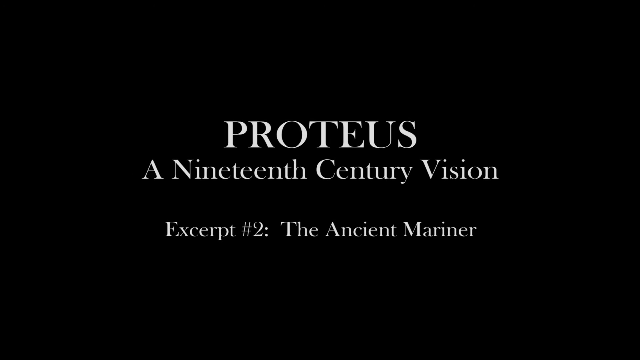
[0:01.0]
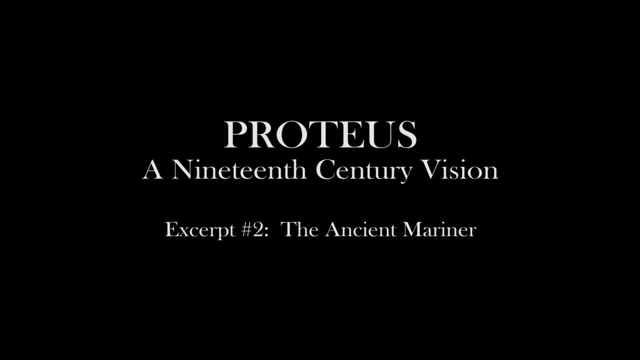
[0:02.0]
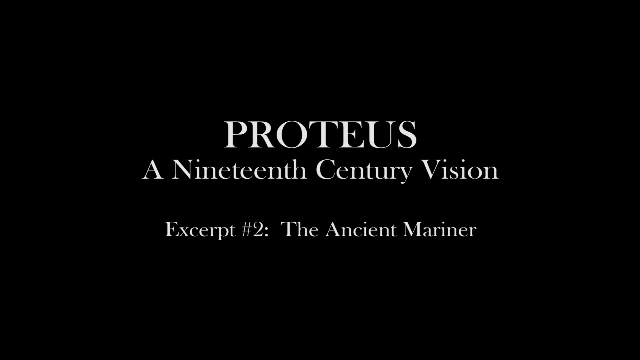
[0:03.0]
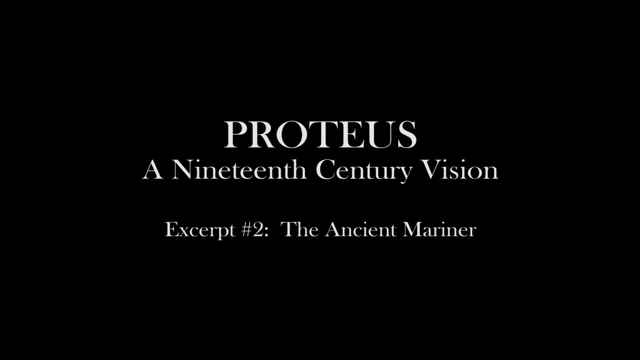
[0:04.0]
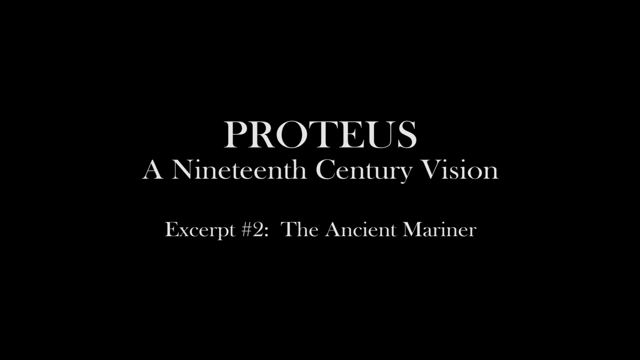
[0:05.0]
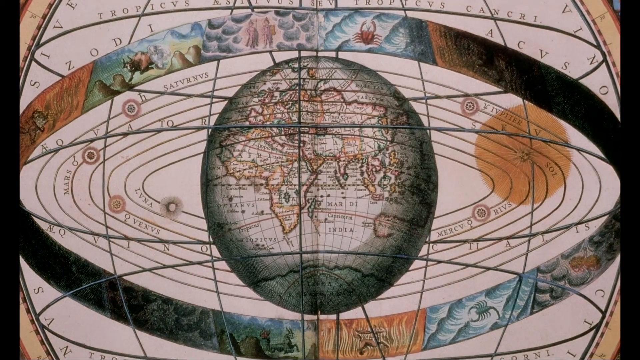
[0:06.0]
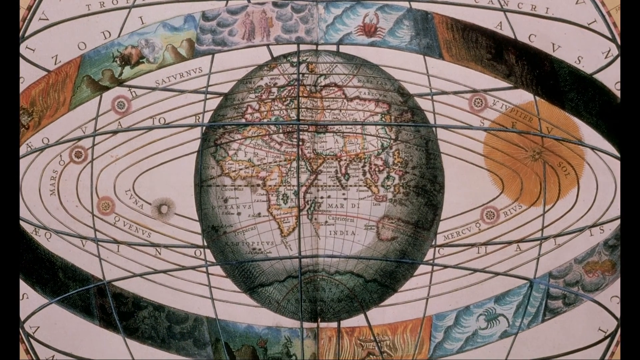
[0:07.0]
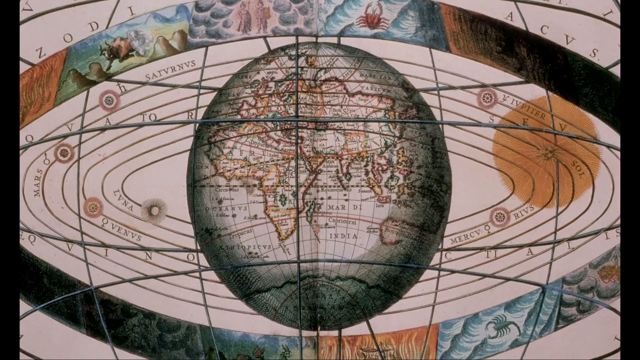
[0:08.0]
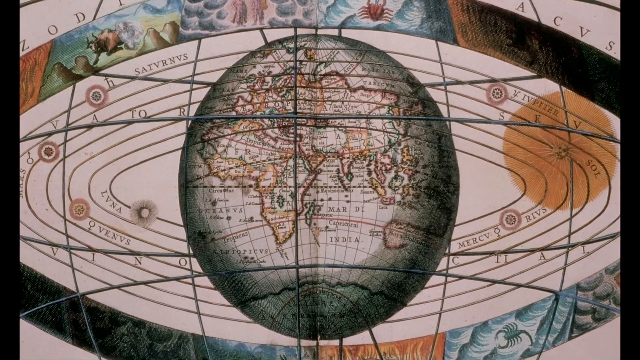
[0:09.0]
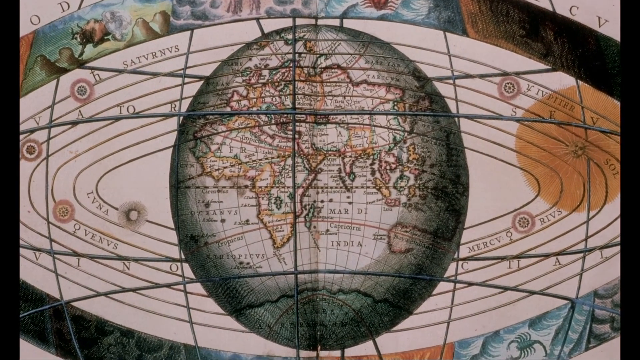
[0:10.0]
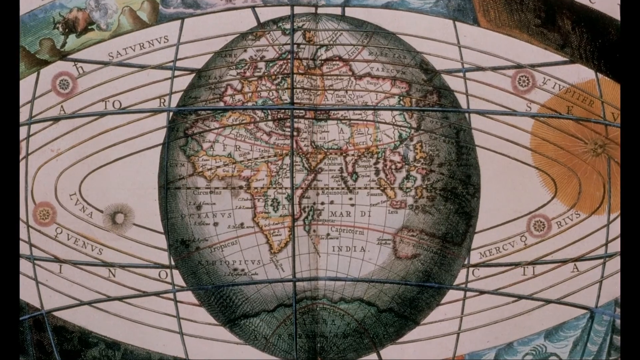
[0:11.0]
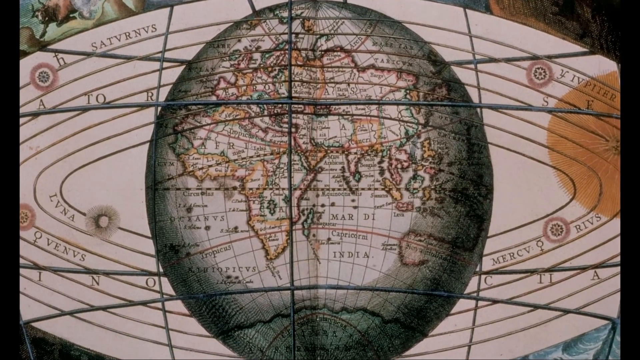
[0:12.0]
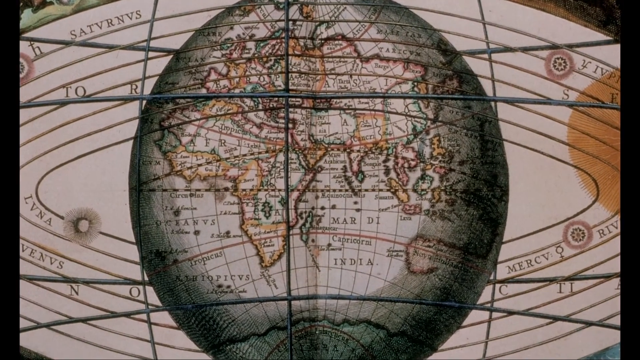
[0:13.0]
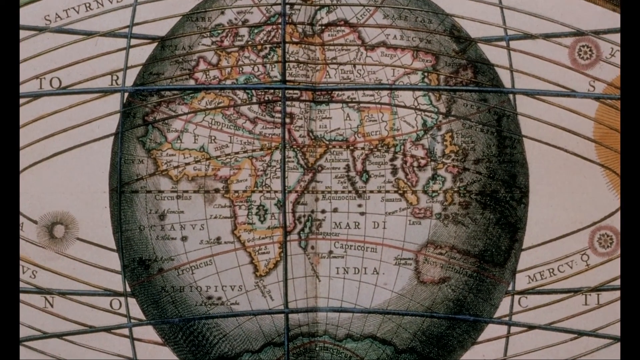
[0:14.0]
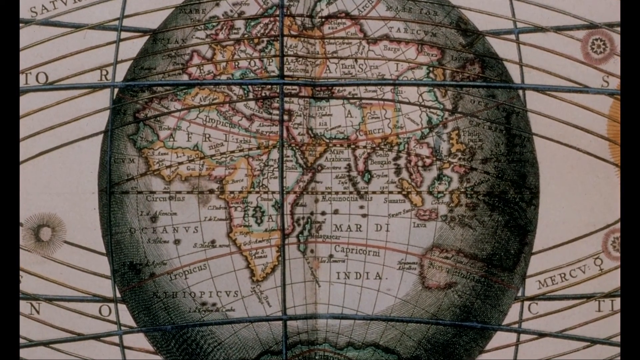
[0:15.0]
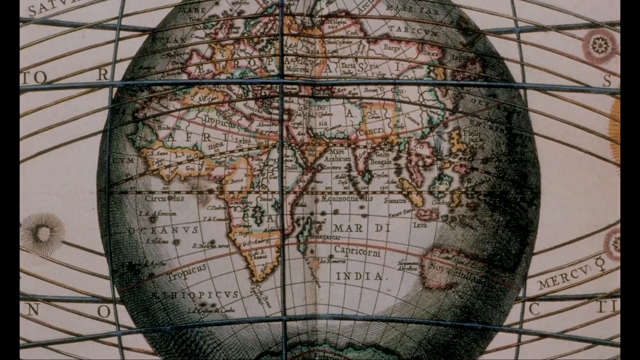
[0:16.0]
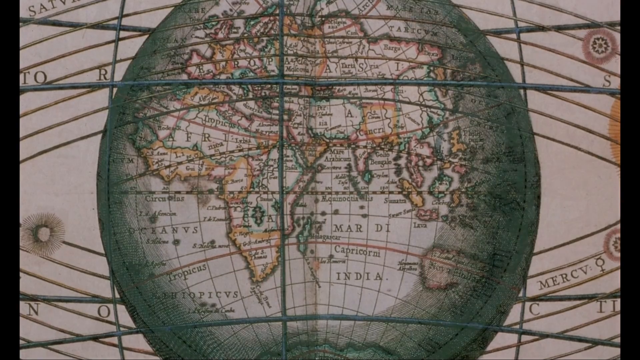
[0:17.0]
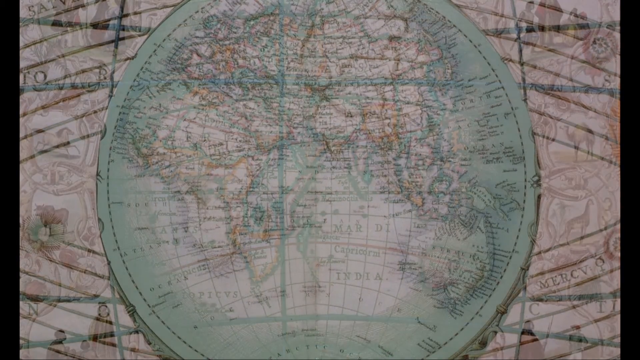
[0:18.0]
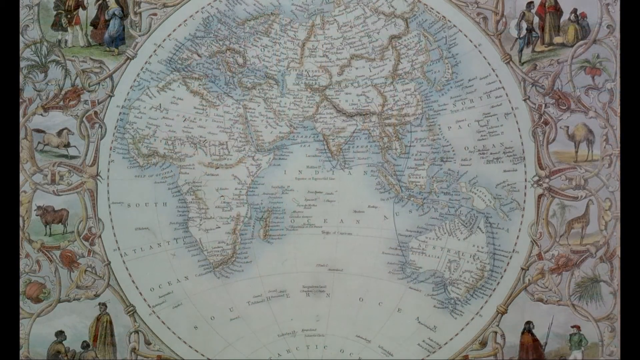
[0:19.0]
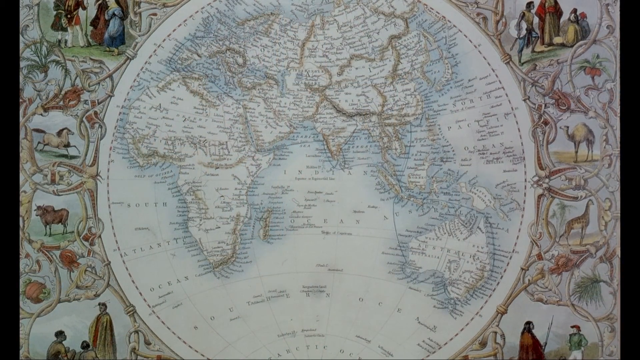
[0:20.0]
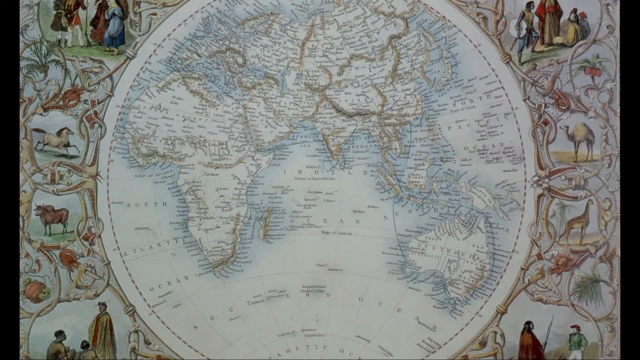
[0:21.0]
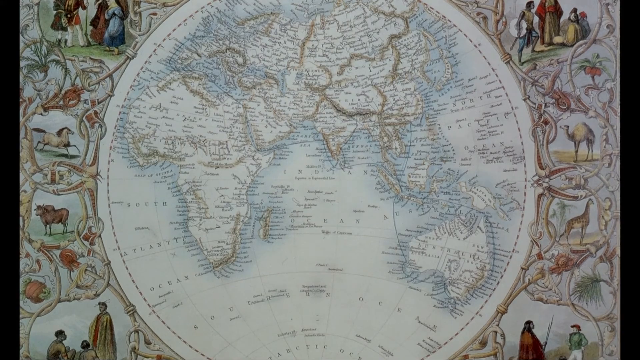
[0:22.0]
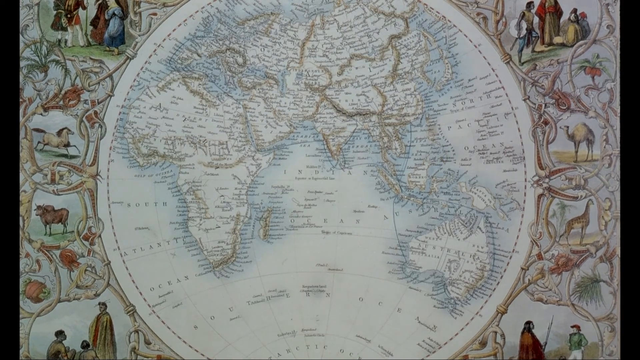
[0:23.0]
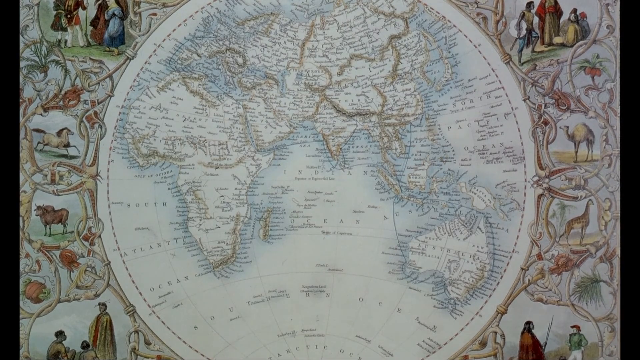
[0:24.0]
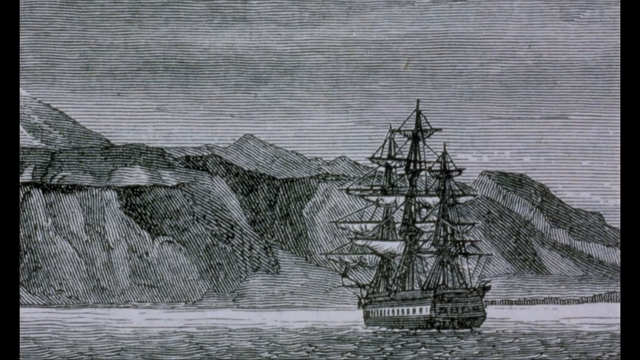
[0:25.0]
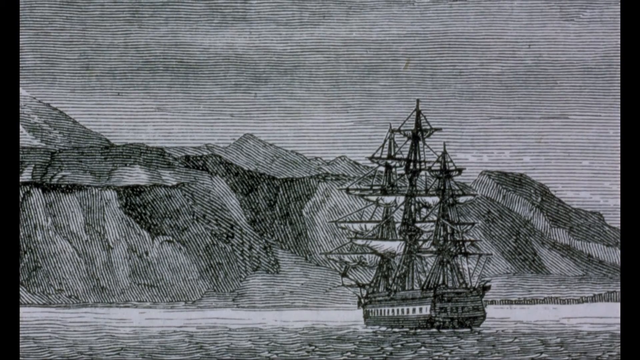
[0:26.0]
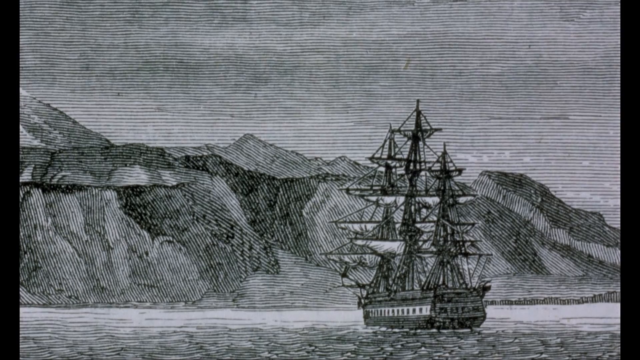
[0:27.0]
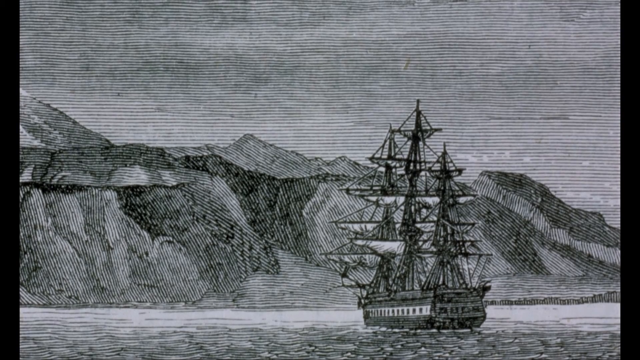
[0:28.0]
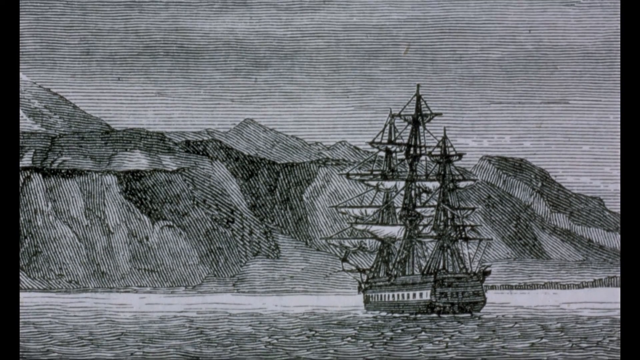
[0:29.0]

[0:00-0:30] The screen is black, and text fades in reading "Proteus". The line underneath reads "A Nineteenth Century Vision", and below that is "Excerpt #2: The Ancient Mariner". The text stays on screen for just a few moments before the scene transitions to a very classic-looking globe illustration with many rings, surrounded by the signs of the zodiac. The camera zooms in, and the globe begins to fade. The next scene is another ancient illustration, still depicting a globe, with images of various animals around it and groups of people in the top left-hand and right-hand sides. The scene then transitions to a black and white drawing reminiscent of scrimshaw, in which a boat with many different sails sails on the water towards mountainous peaks. The camera pans down towards the water beneath the boat.